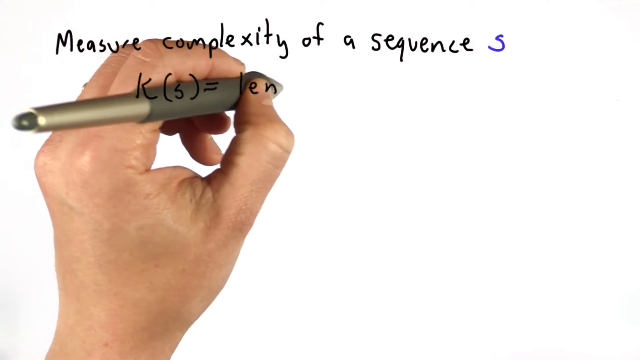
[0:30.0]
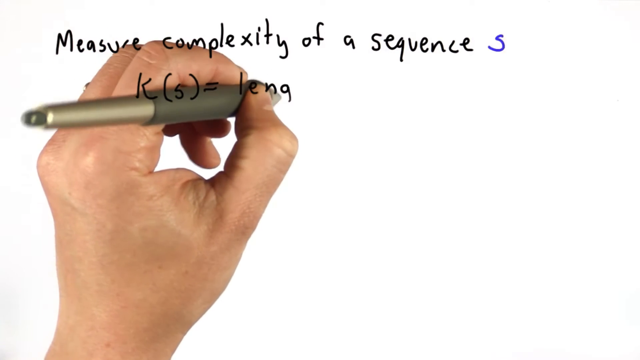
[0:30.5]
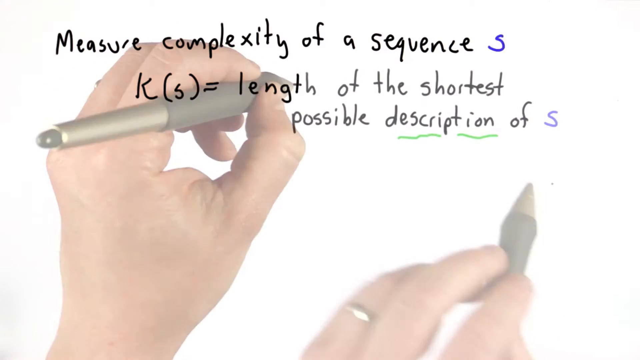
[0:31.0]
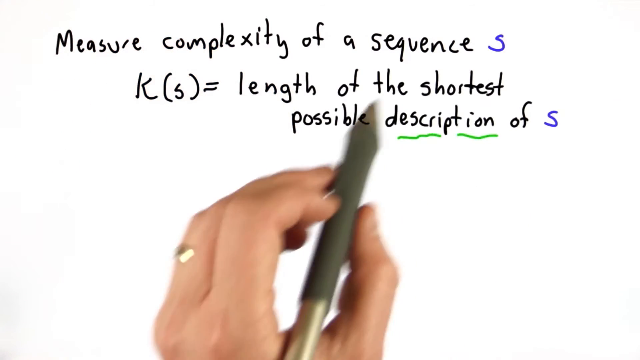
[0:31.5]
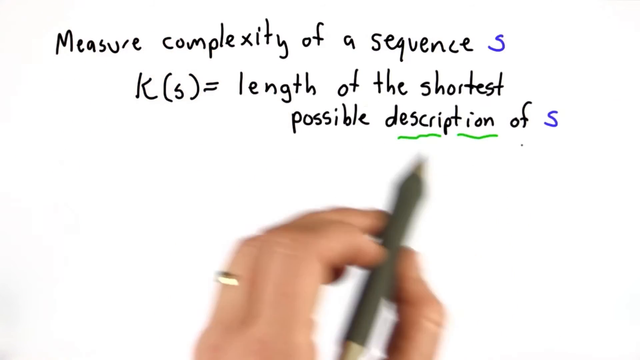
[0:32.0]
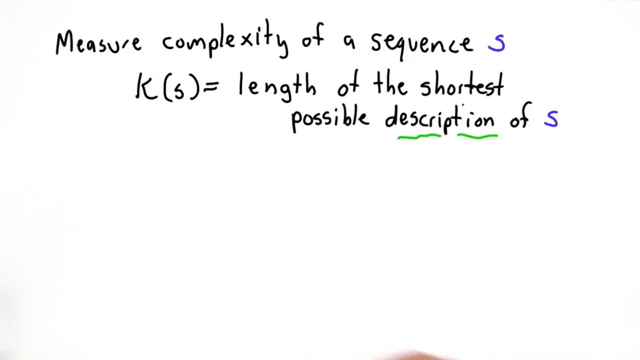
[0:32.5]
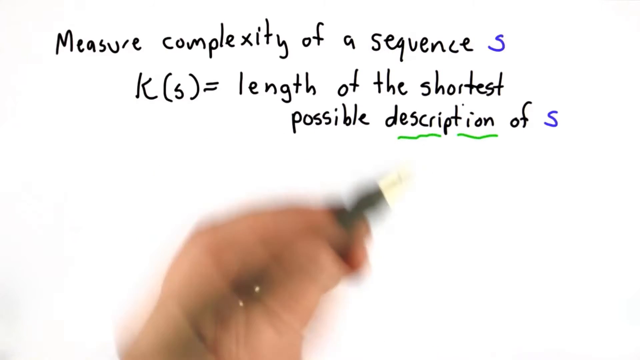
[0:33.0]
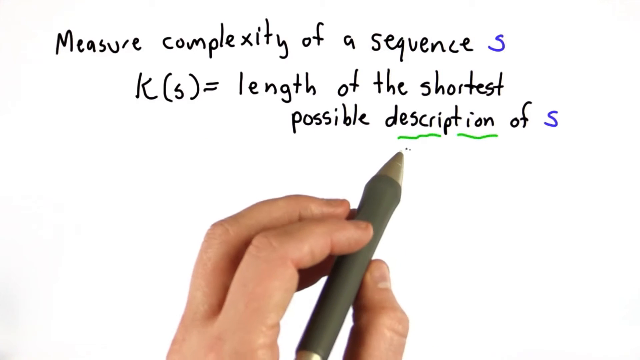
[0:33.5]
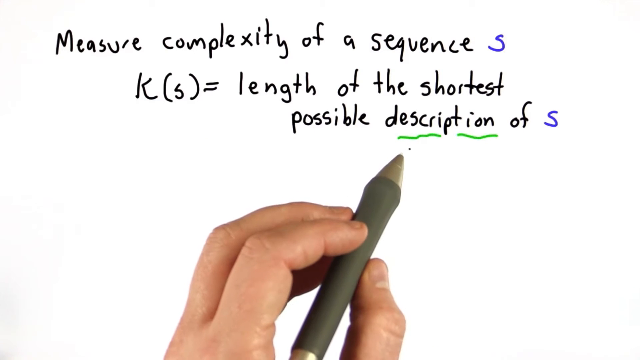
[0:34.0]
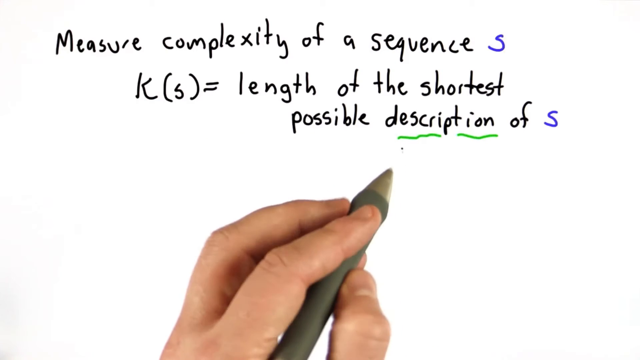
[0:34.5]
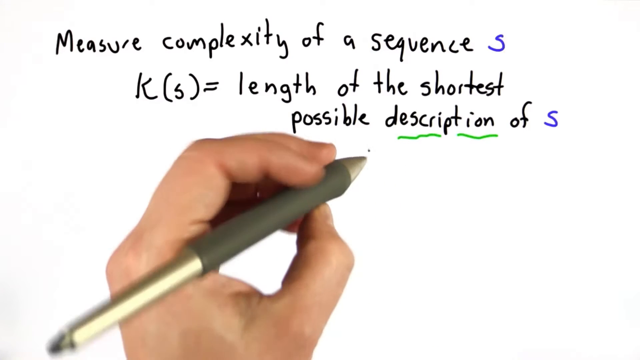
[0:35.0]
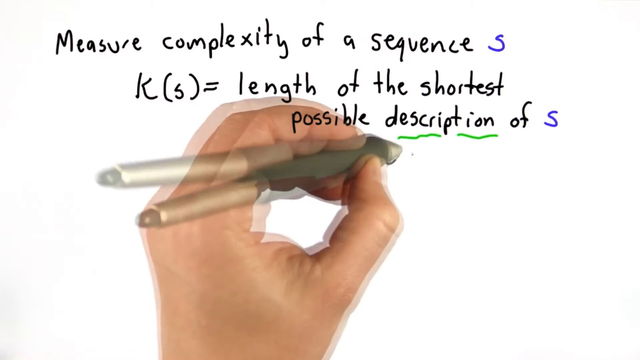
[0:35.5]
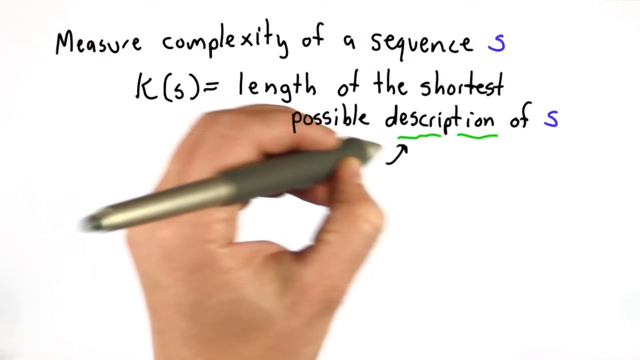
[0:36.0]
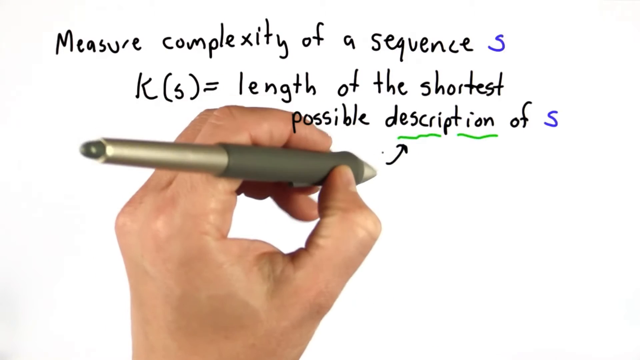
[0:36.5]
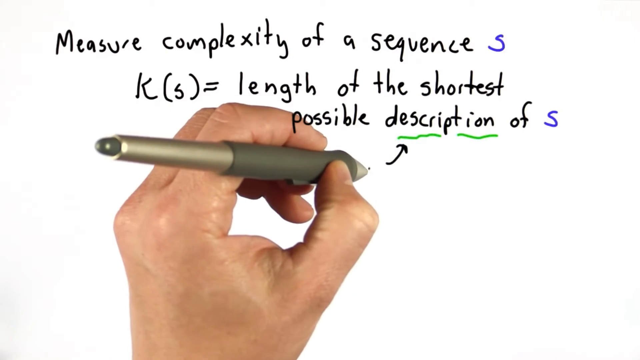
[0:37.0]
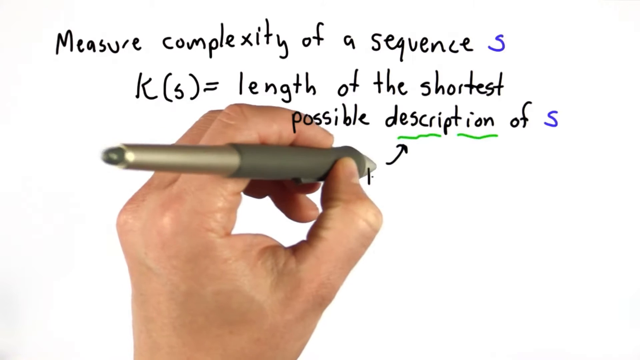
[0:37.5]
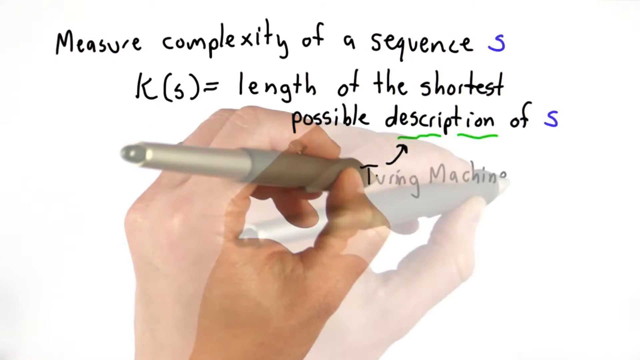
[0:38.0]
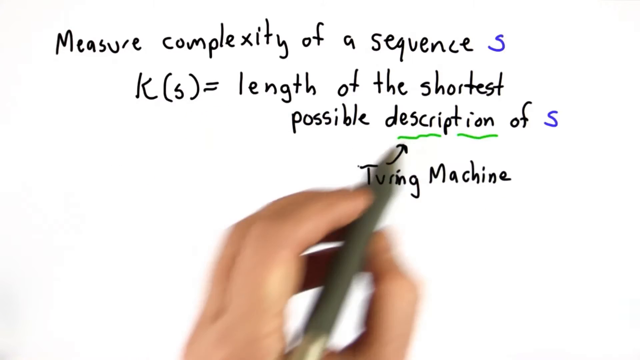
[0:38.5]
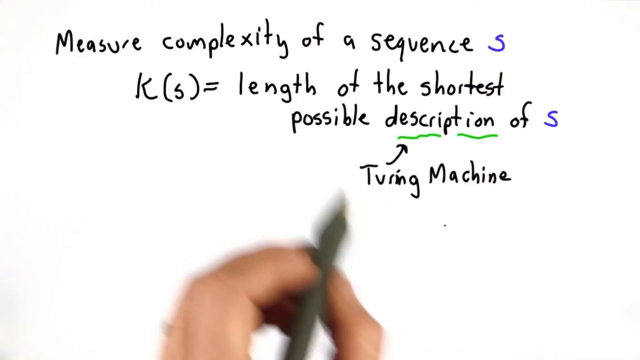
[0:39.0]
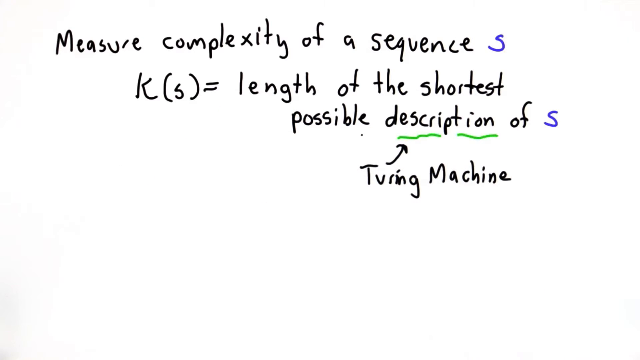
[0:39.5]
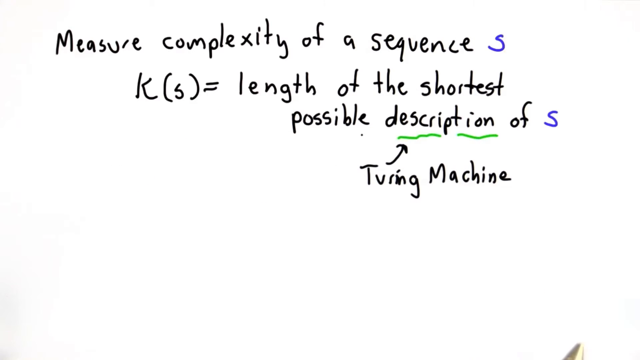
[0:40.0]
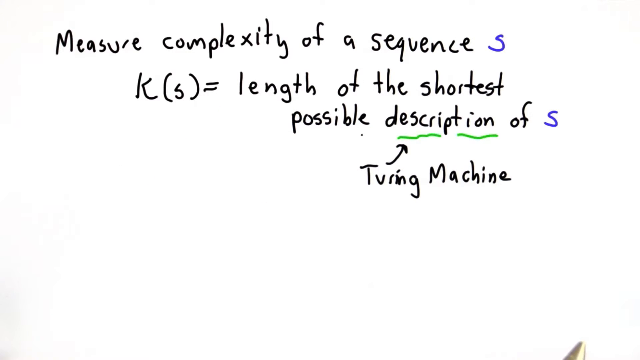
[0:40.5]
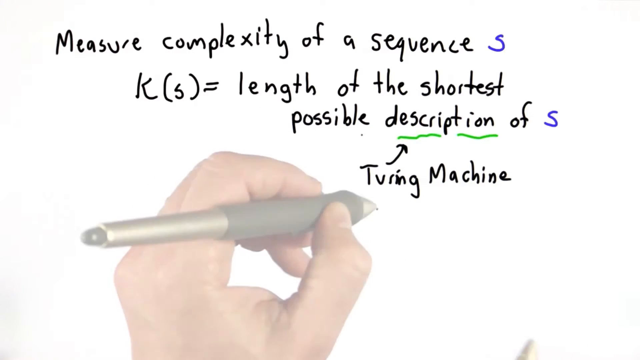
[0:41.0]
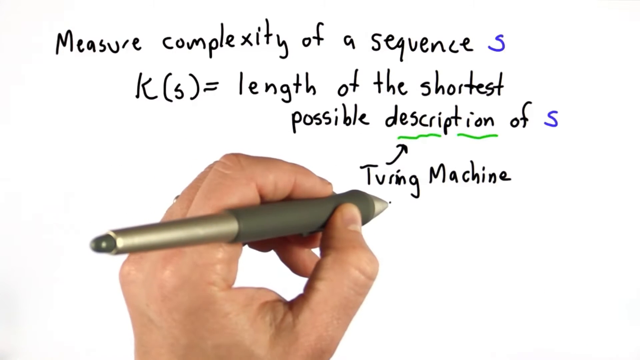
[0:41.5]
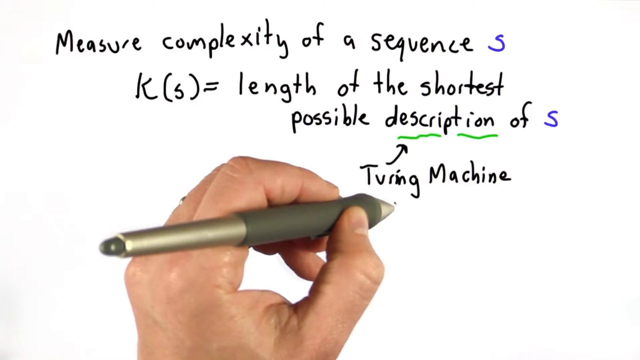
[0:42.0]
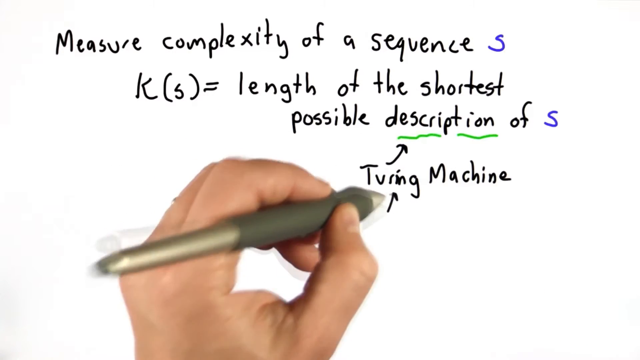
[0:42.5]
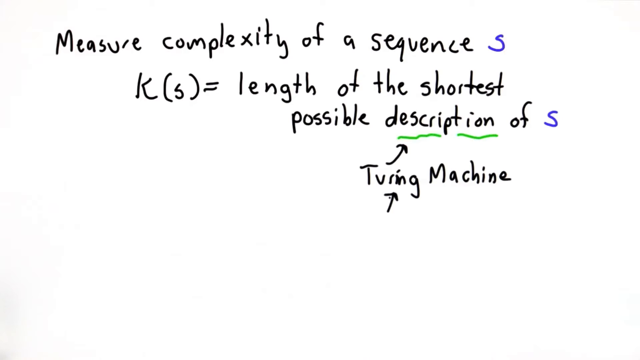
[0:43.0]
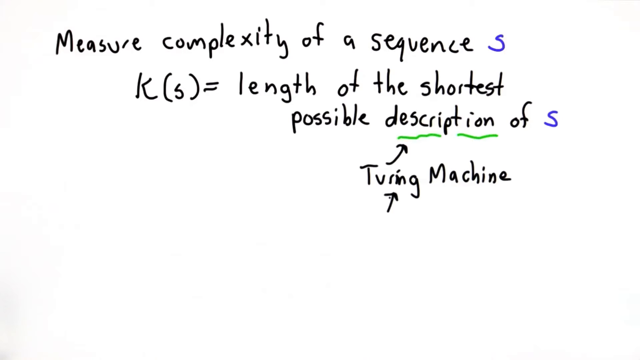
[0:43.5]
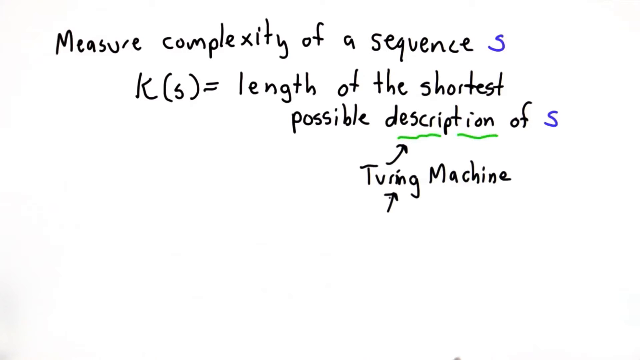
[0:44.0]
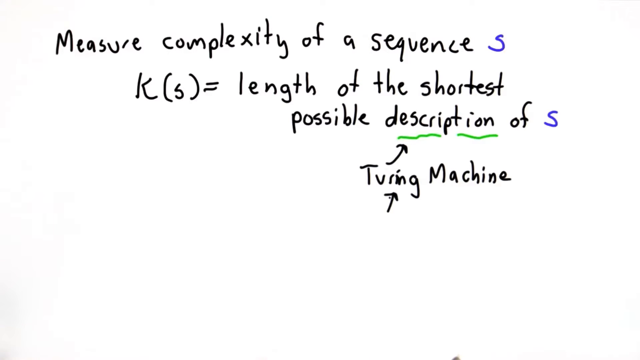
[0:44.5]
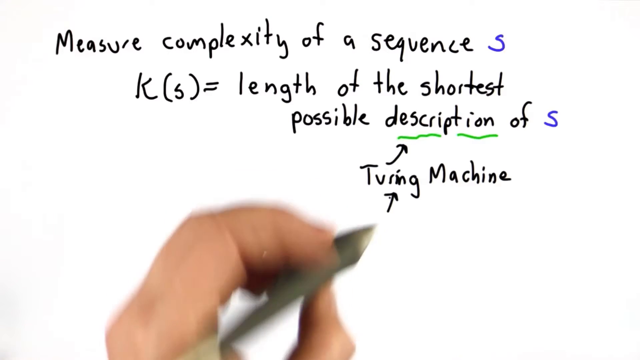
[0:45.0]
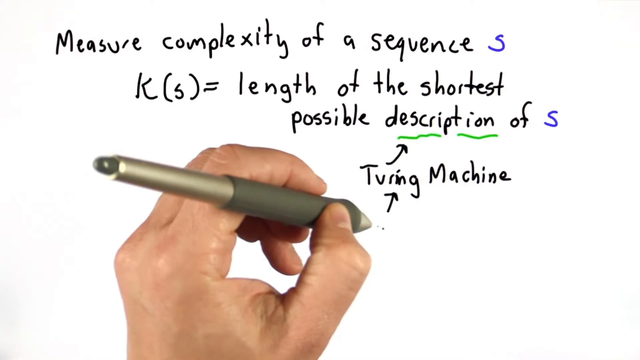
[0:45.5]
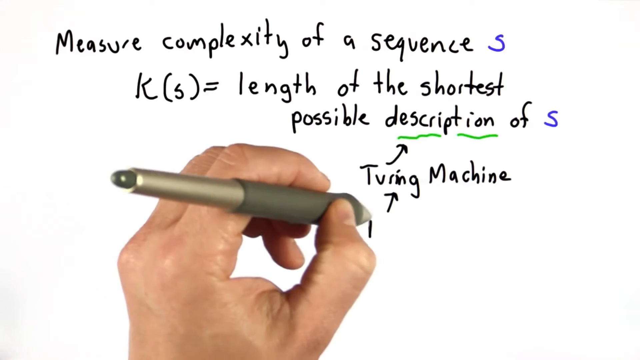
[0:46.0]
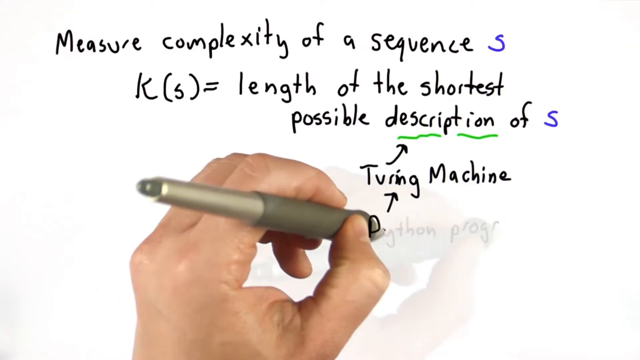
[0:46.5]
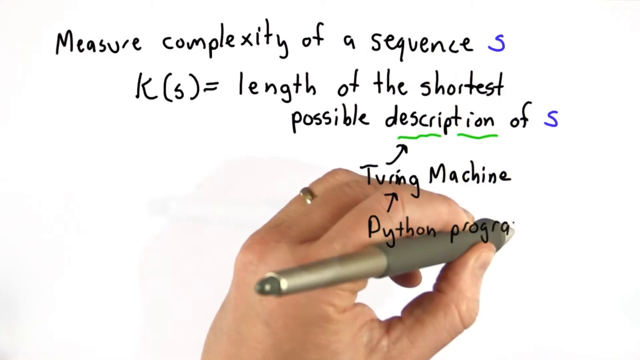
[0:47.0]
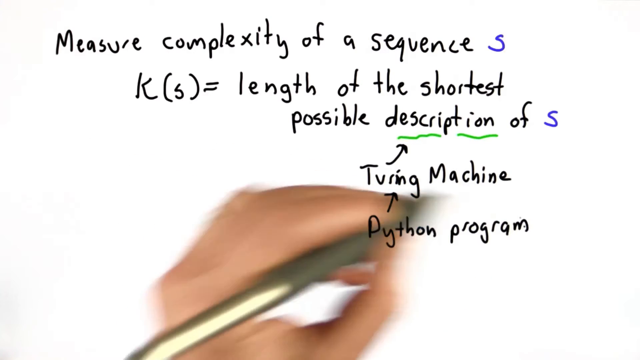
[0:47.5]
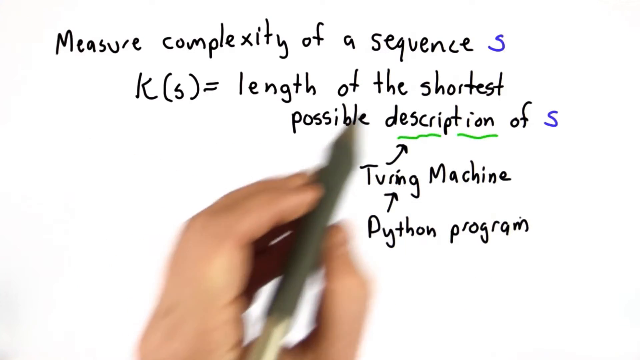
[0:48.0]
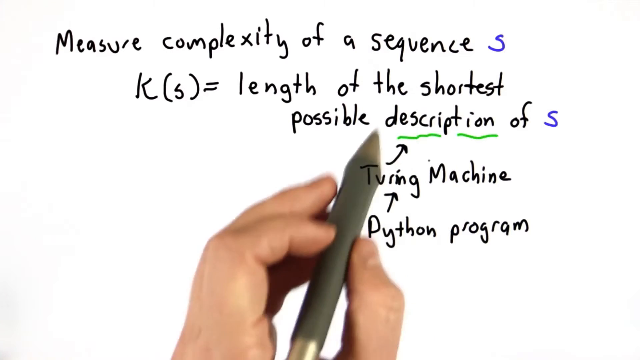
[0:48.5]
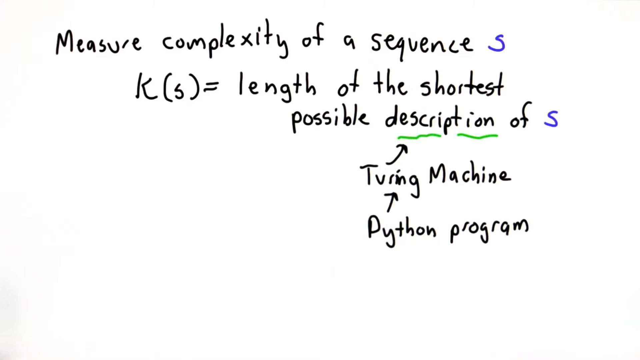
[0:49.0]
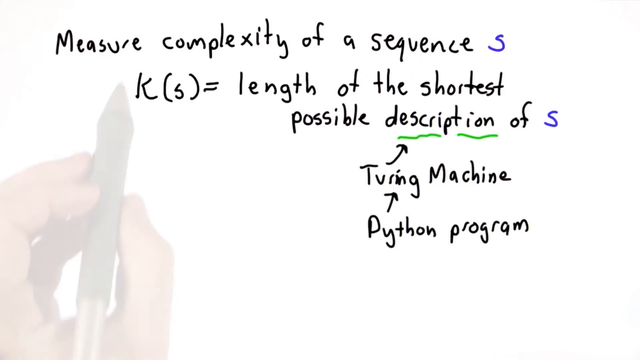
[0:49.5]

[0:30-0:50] On the white screen, "measure complexity of a sequence" is written in black at the top, followed by a blue s. A left hand holding a gold-colored pen writes on the screen: K, then s in parentheses, then "equals LEN." When the hand moves away, the writing reads "length of the shortest possible description of s." The hand holding the pen has a ring on its ring finger. He draws an arrow underneath the word "description" and, below the arrow, writes "Turing machine." He then draws a small black arrow pointing up to the word "Turing," and underneath that arrow he writes "Python program."